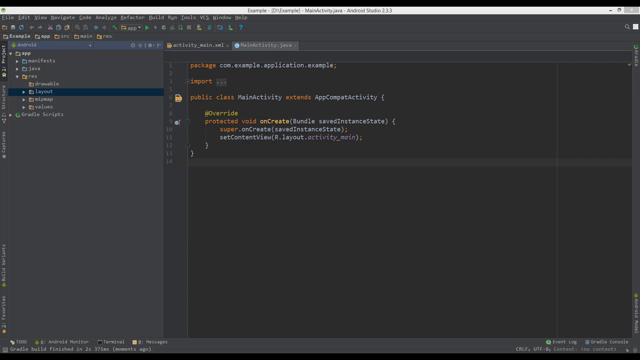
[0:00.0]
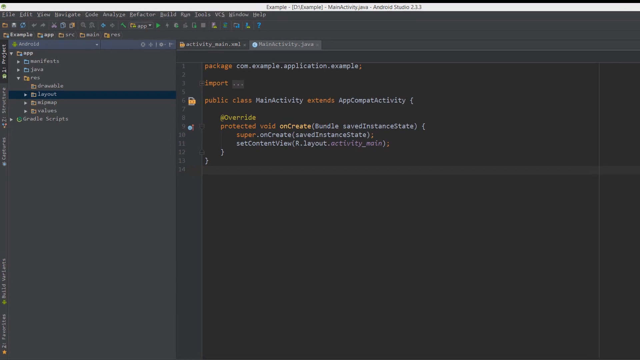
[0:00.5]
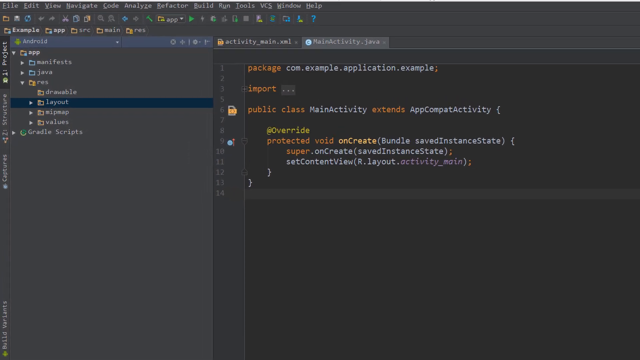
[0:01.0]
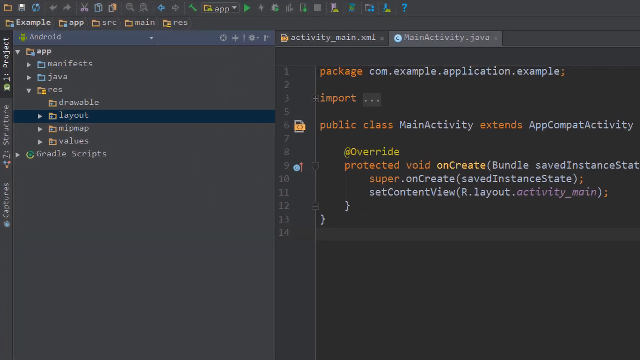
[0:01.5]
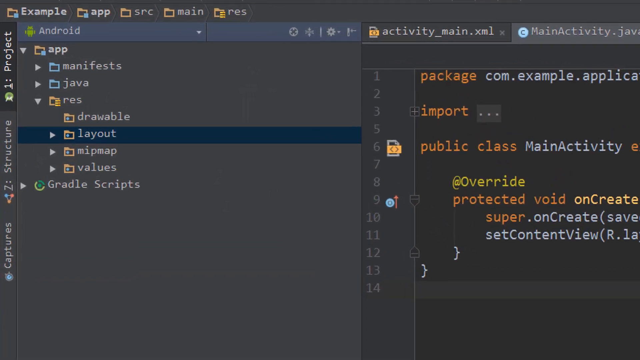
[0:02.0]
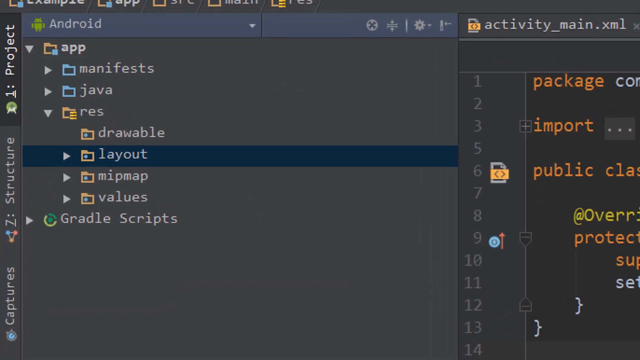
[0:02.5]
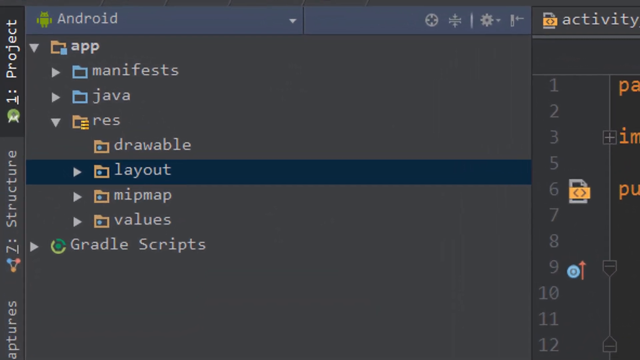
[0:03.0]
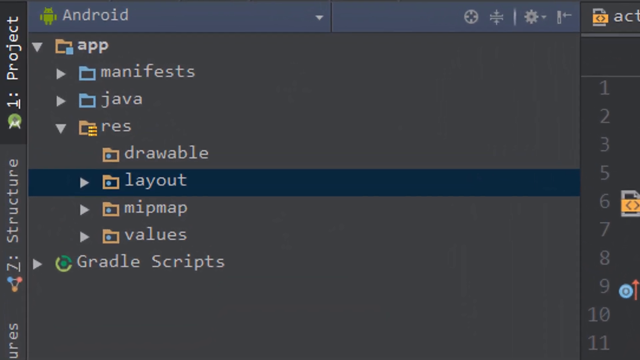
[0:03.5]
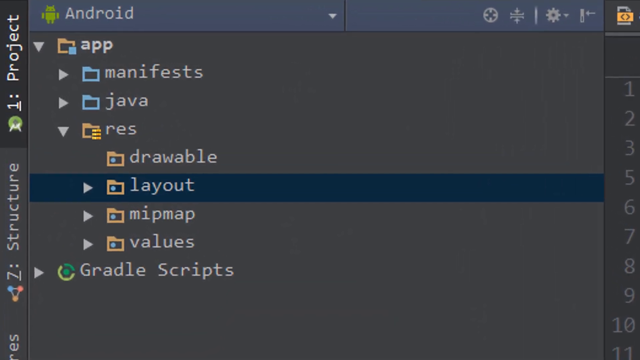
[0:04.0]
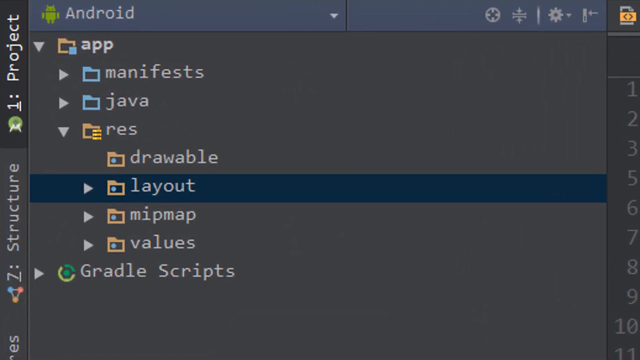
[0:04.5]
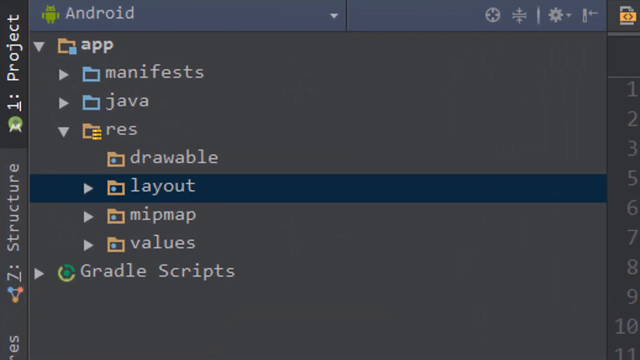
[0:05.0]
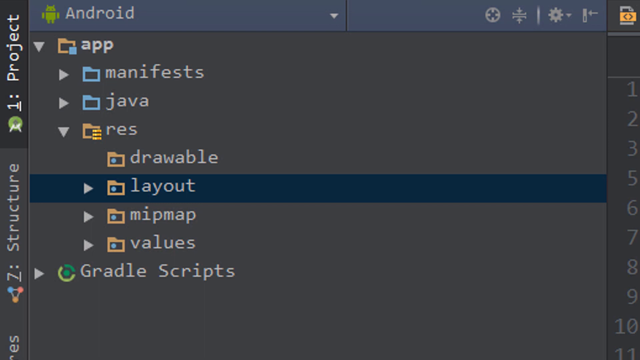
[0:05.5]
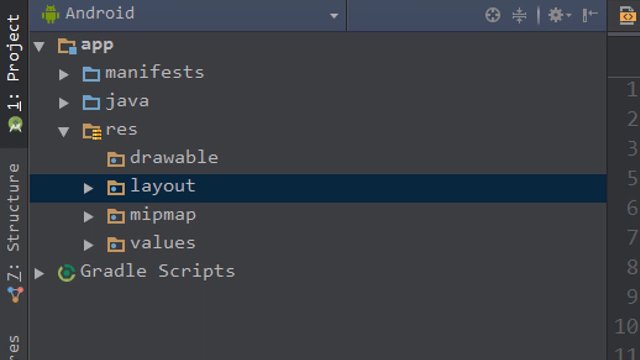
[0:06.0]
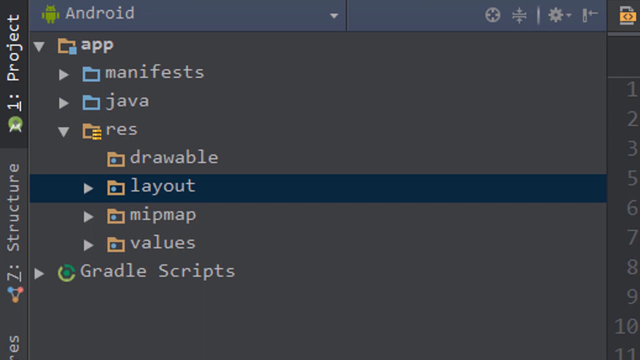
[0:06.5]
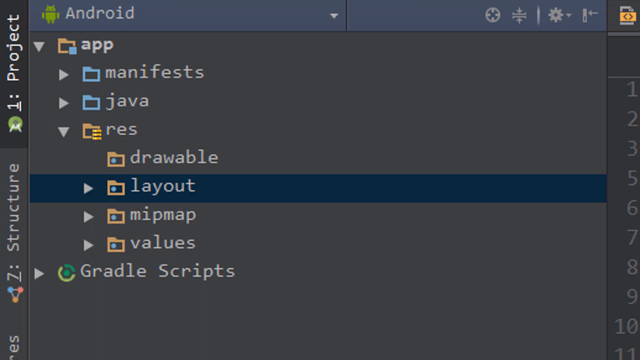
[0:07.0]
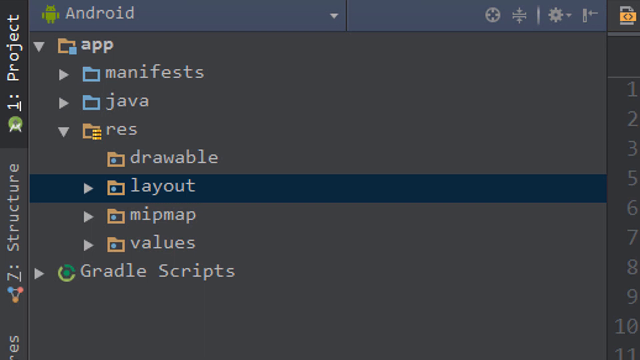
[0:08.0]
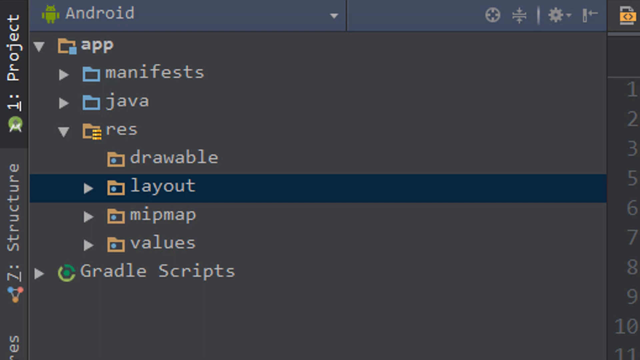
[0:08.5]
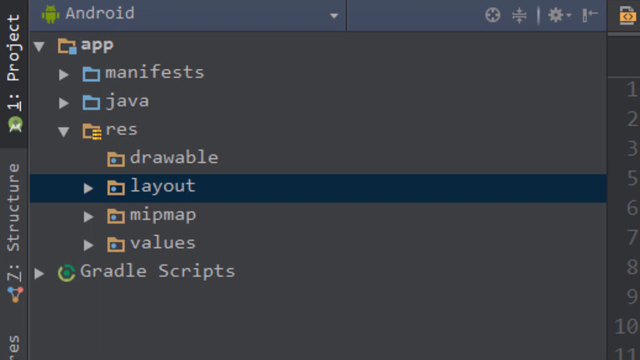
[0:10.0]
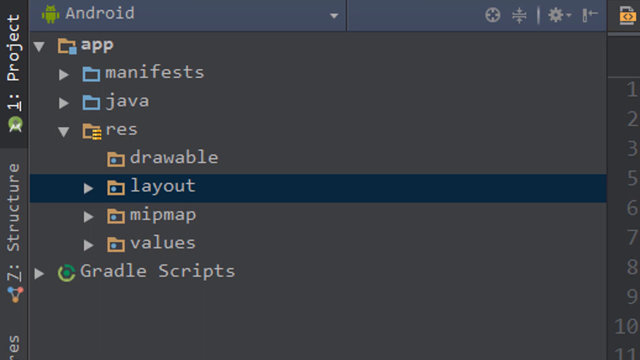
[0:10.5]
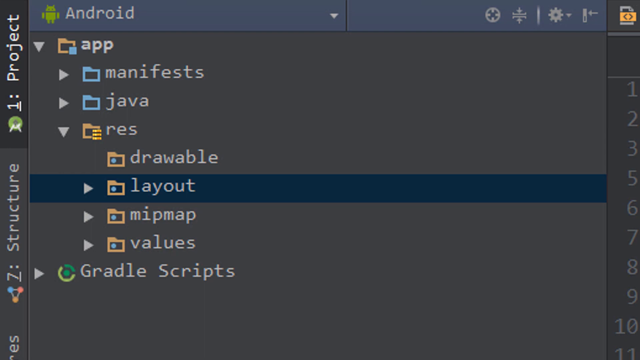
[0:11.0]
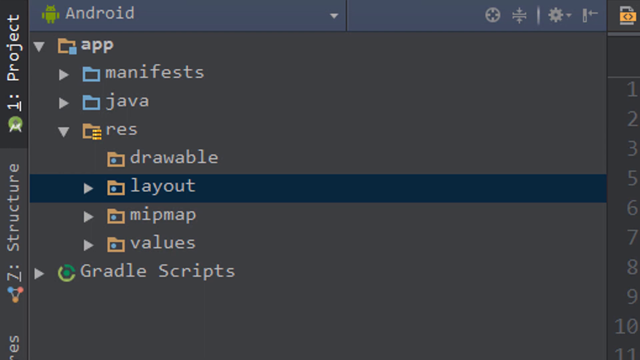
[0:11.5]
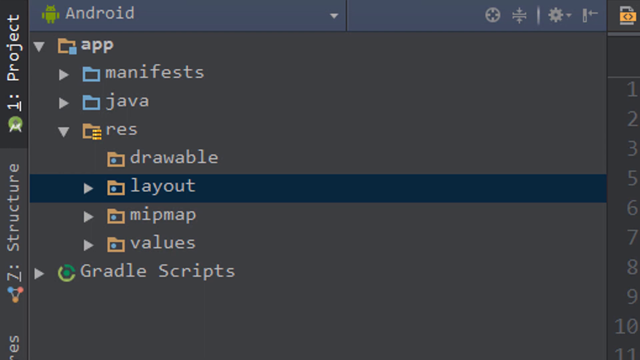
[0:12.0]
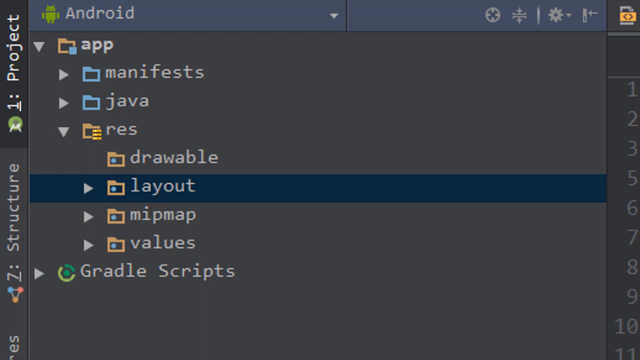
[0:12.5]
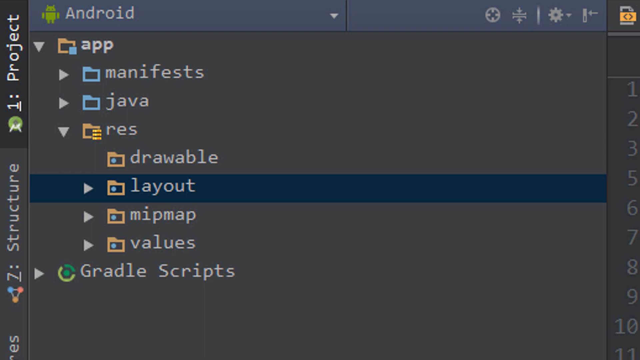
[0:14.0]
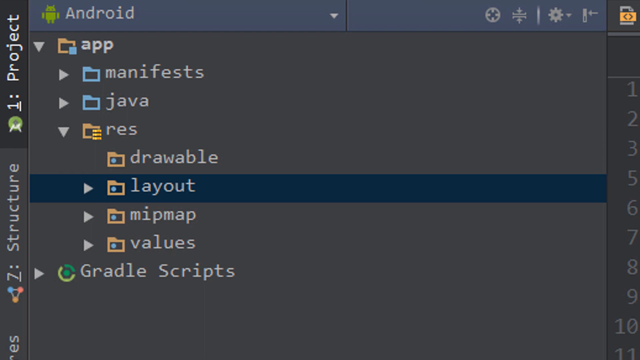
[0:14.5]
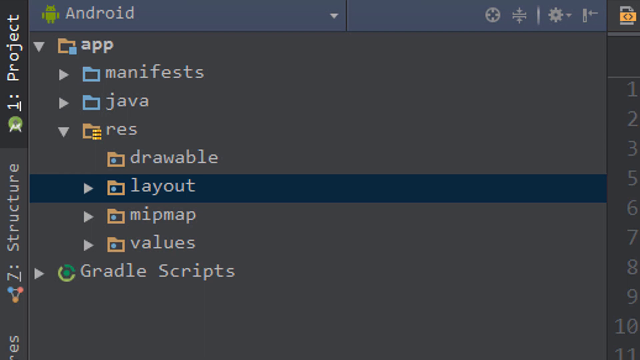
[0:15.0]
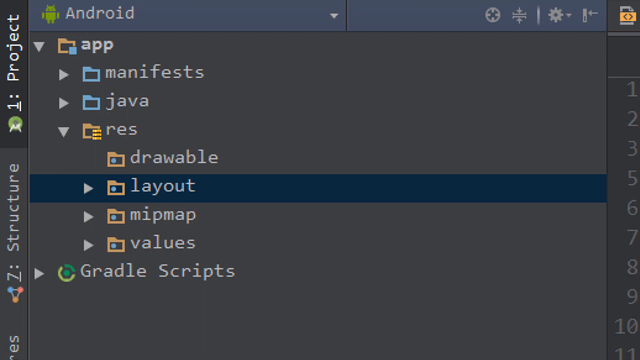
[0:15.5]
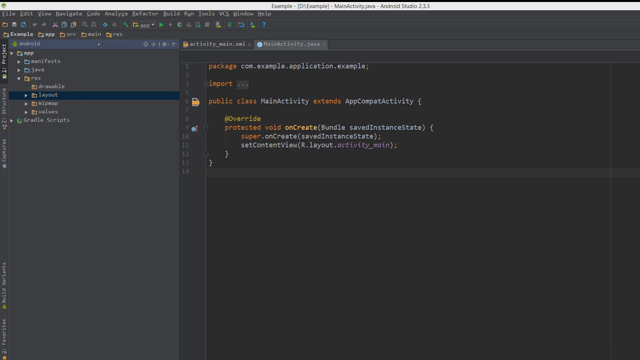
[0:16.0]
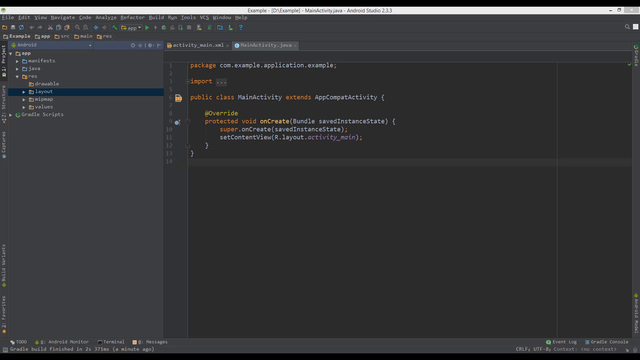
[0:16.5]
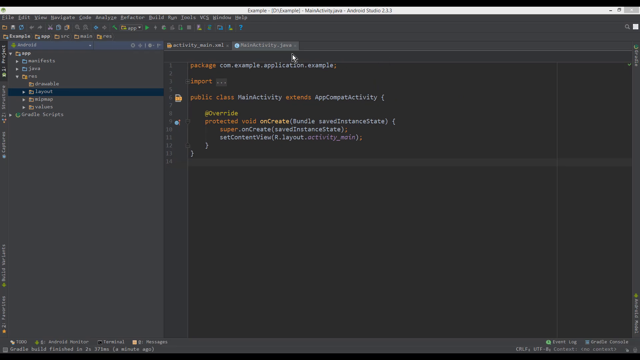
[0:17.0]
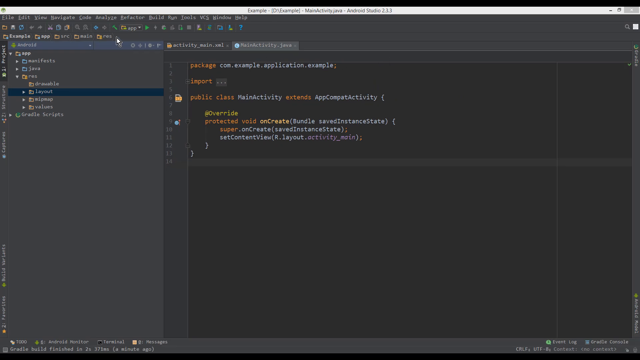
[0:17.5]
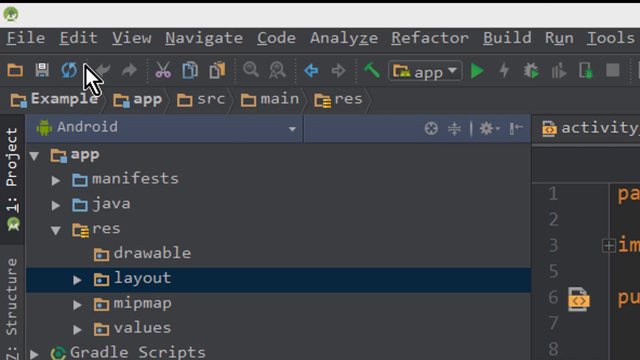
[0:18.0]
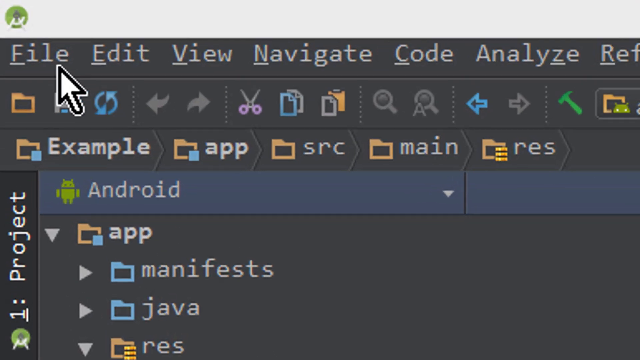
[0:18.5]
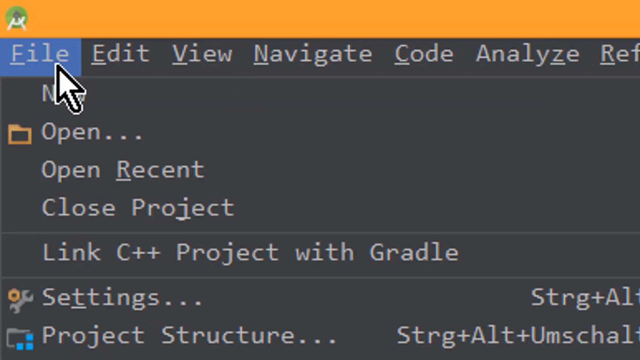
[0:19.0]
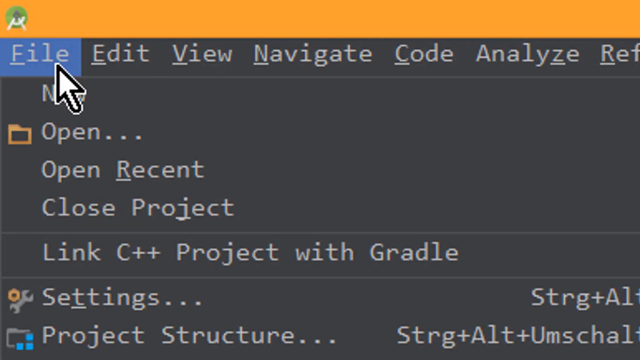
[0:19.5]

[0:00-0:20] The video begins on a black screen with orange and white code in the top section of the middle of the screen. The view zooms in on the left-hand side, where there is a heading reading "android" with a number of folders below it; a folder called "layout" is highlighted in dark blue. The view zooms right in on that folder and pauses there for several seconds without anything happening. The folders, from top to bottom, are "App", which expands to contain "manifests" and "Java", then "Res", "Drawable", "Layout", "Mipmap", "Values" and "Gradle Scripts". The camera zooms back out to show the whole screen again, with the code in the top middle. It then zooms into the top left corner, where a white and black mouse pointer moves to the top left corner under white text reading "file". The user clicks on it and it highlights in blue; they scroll down to "close project" and past it to the settings button, which is highlighted in blue.